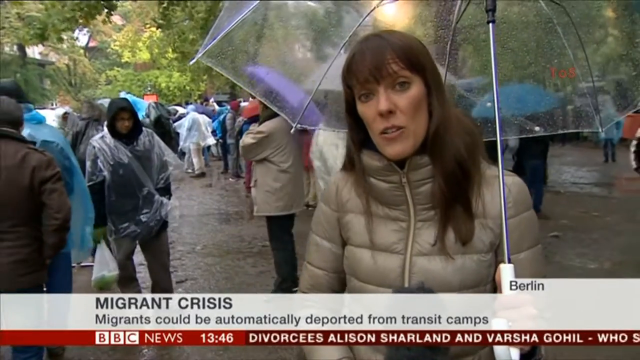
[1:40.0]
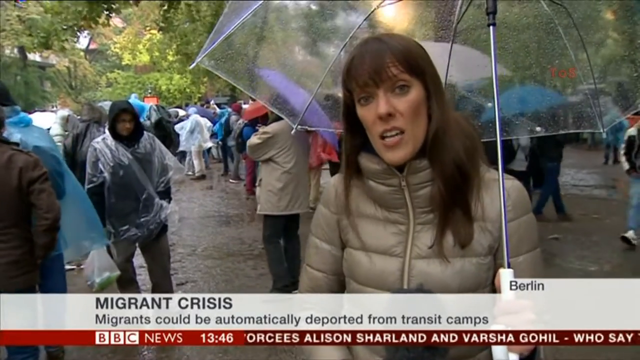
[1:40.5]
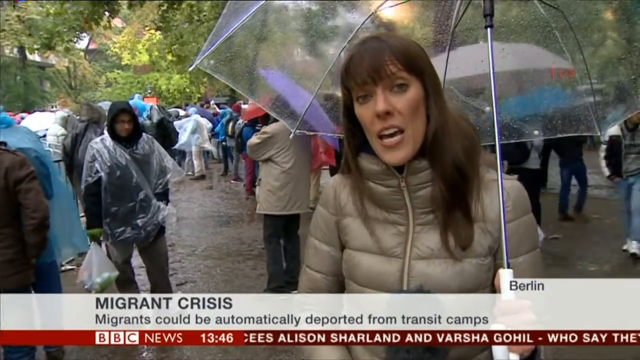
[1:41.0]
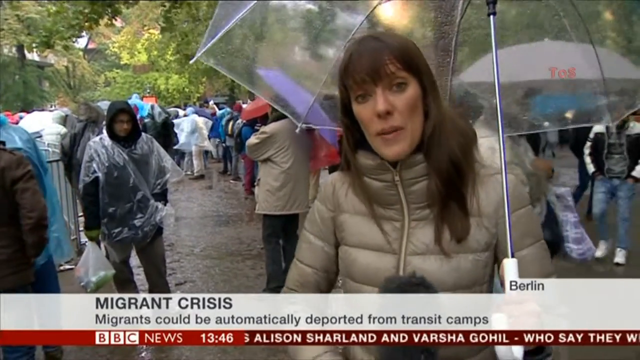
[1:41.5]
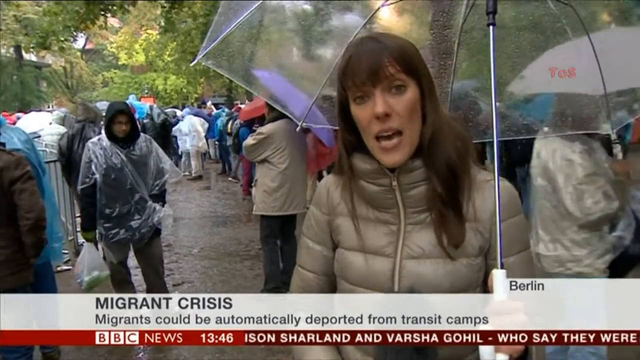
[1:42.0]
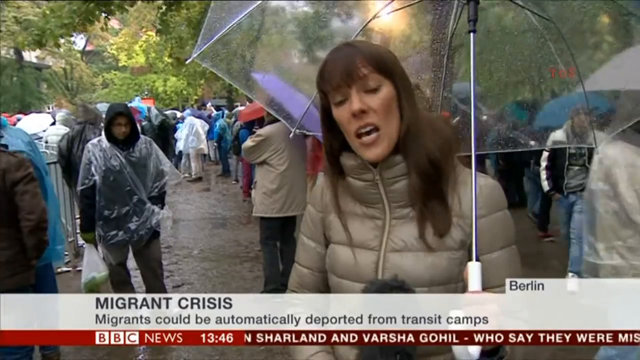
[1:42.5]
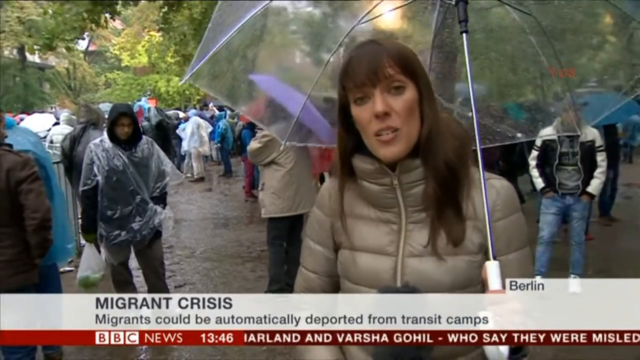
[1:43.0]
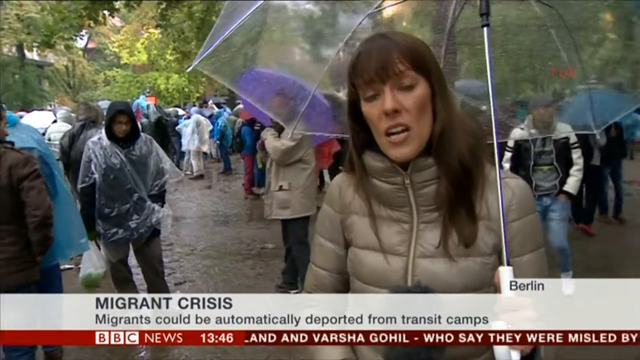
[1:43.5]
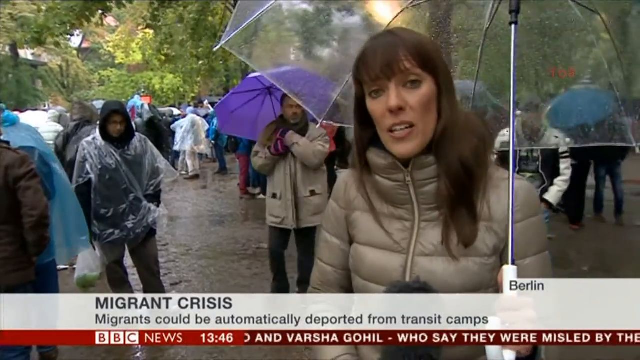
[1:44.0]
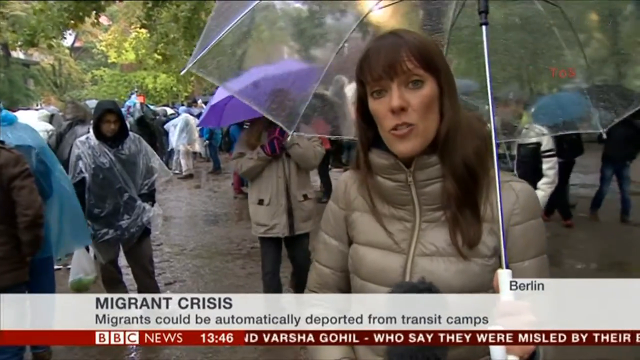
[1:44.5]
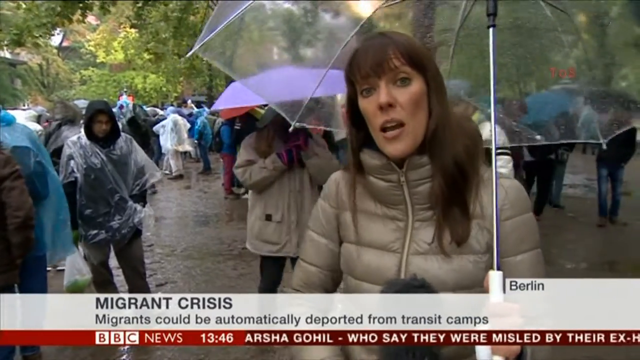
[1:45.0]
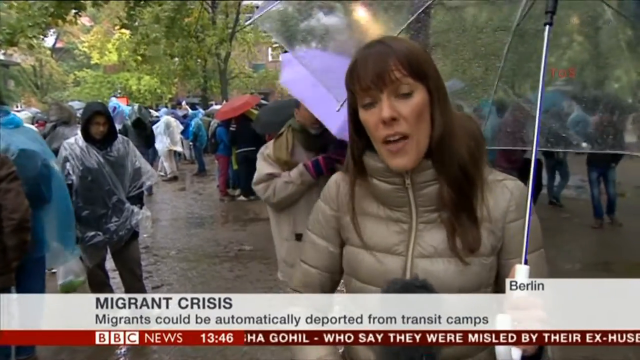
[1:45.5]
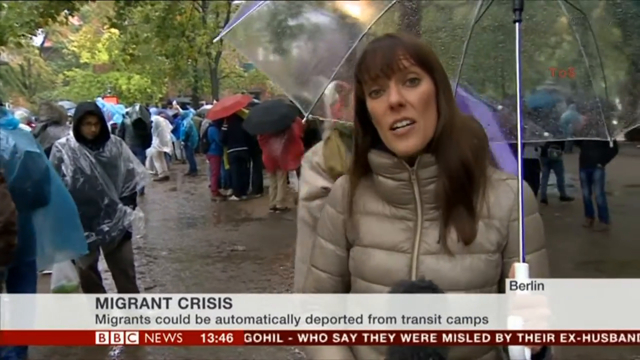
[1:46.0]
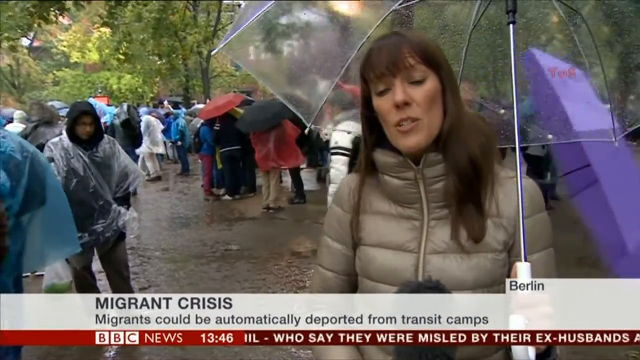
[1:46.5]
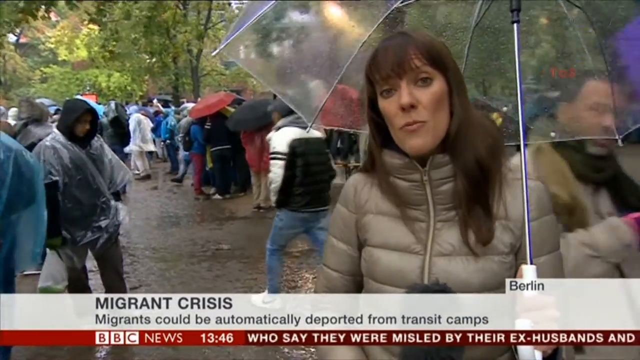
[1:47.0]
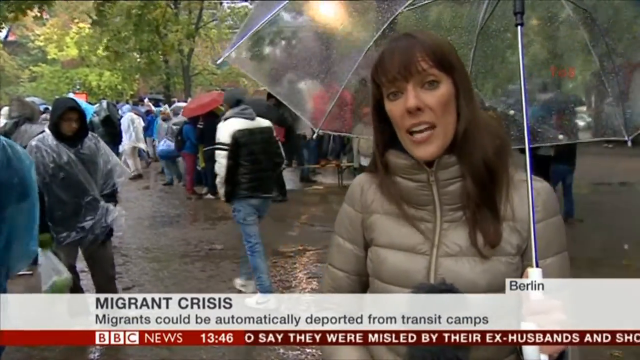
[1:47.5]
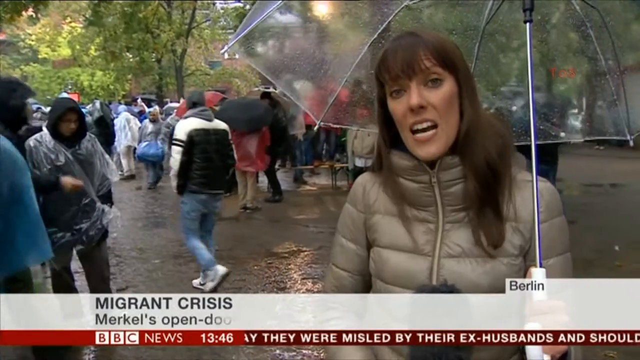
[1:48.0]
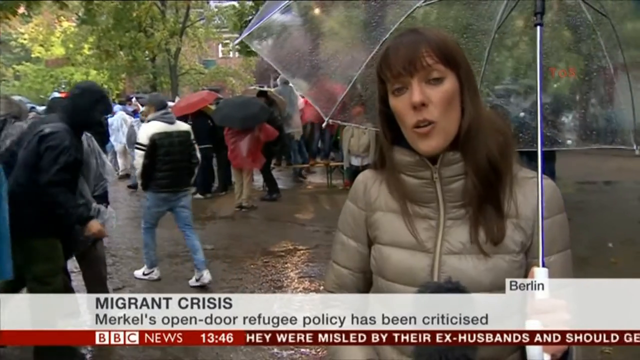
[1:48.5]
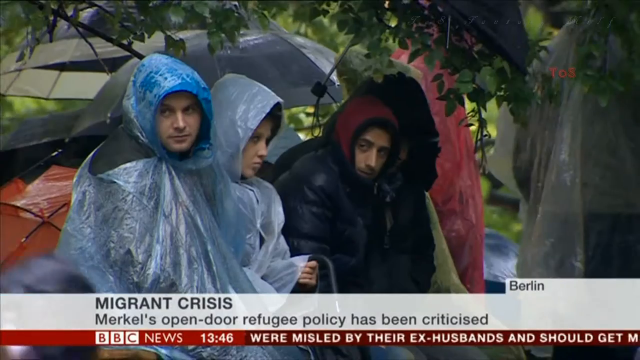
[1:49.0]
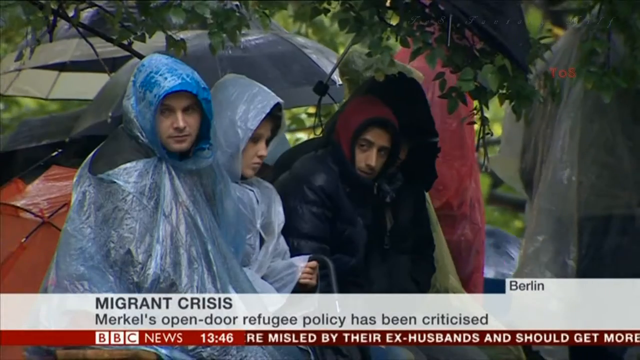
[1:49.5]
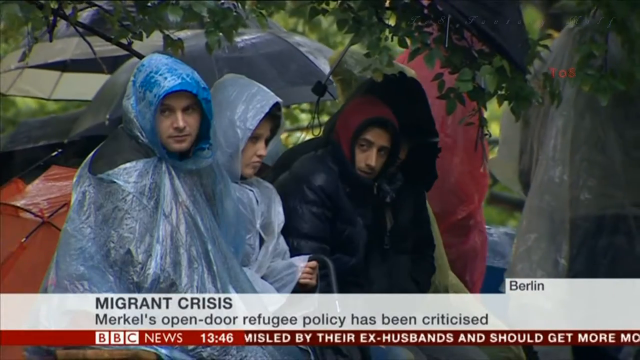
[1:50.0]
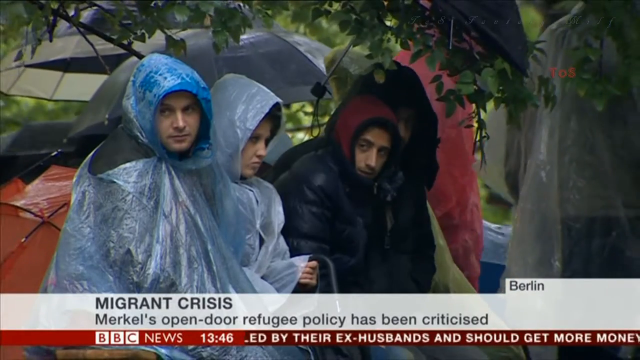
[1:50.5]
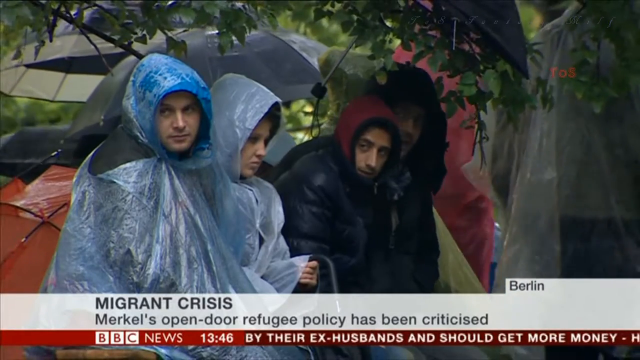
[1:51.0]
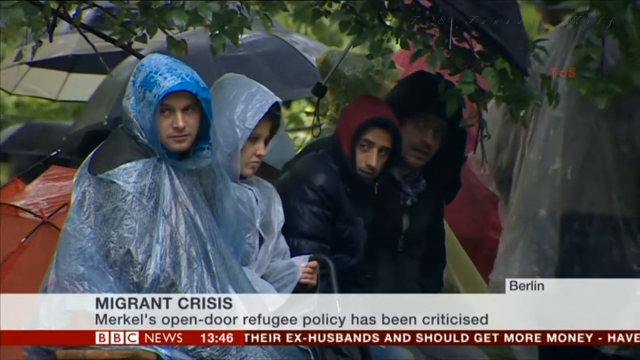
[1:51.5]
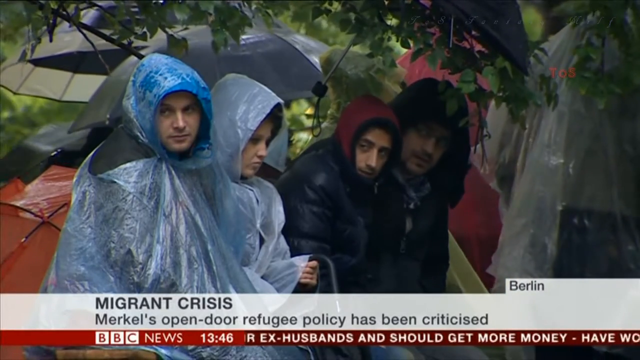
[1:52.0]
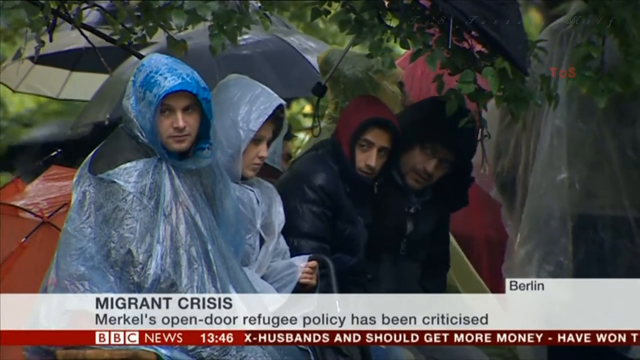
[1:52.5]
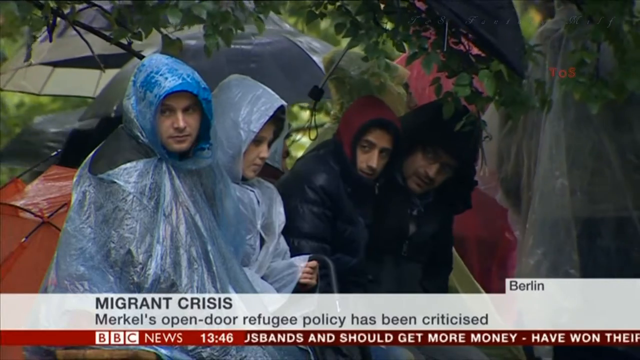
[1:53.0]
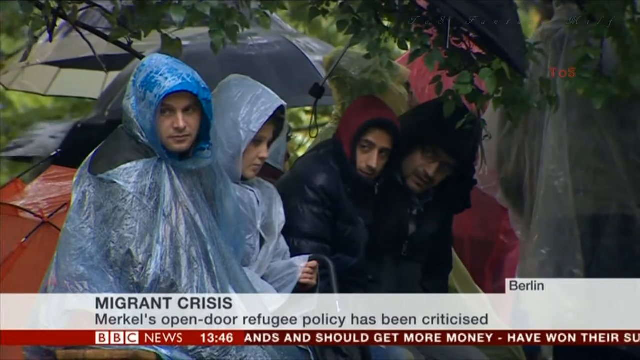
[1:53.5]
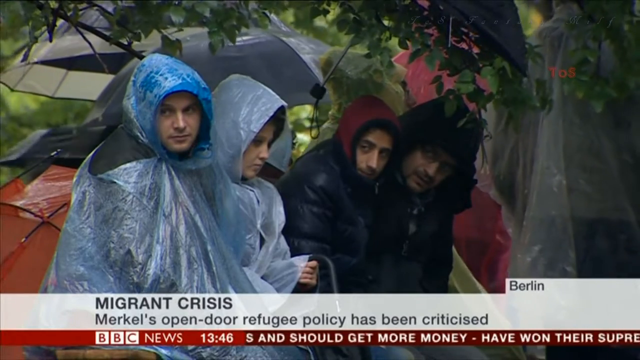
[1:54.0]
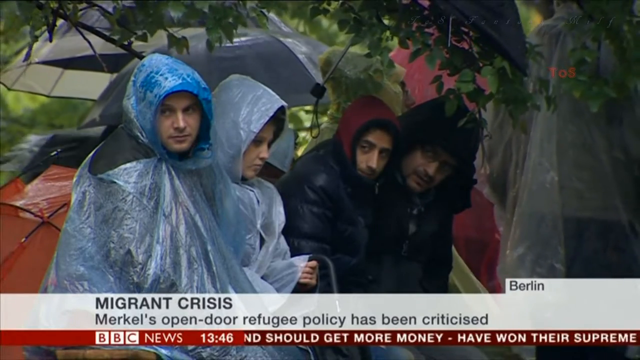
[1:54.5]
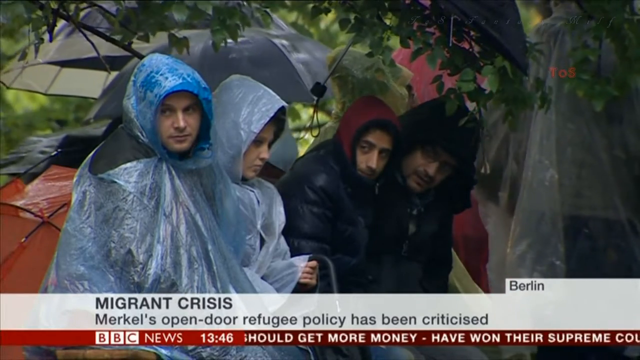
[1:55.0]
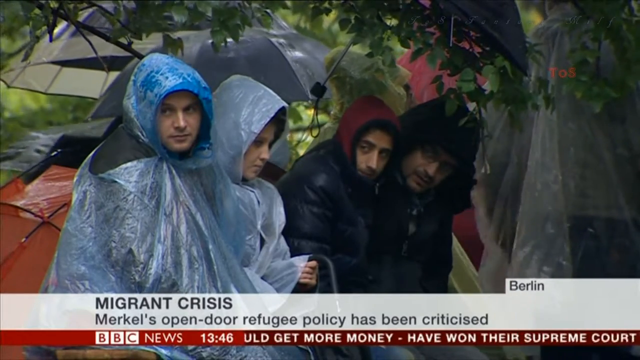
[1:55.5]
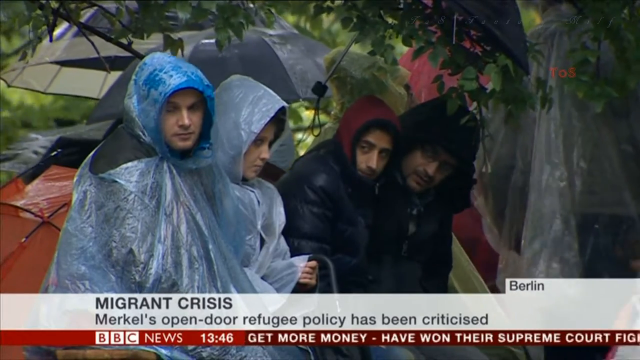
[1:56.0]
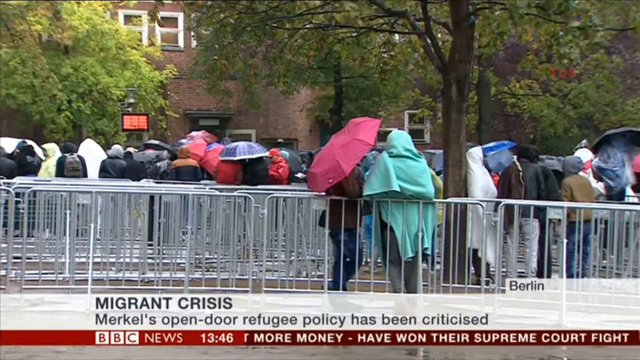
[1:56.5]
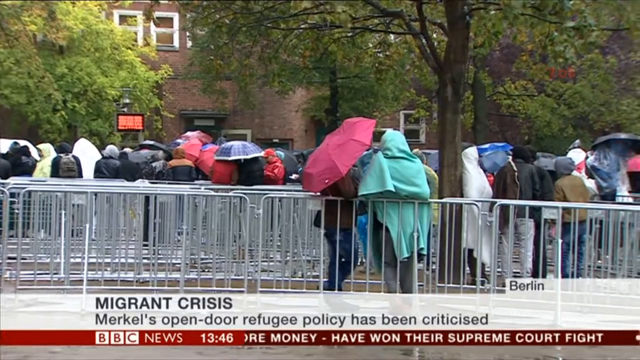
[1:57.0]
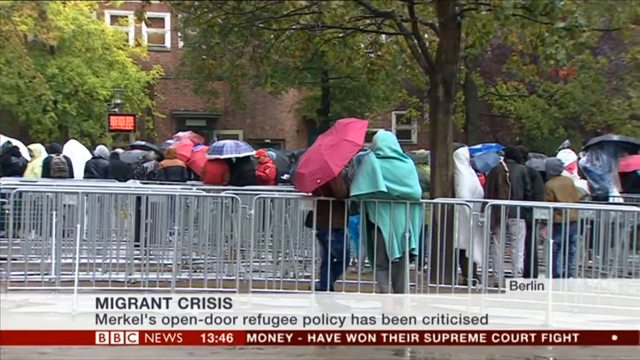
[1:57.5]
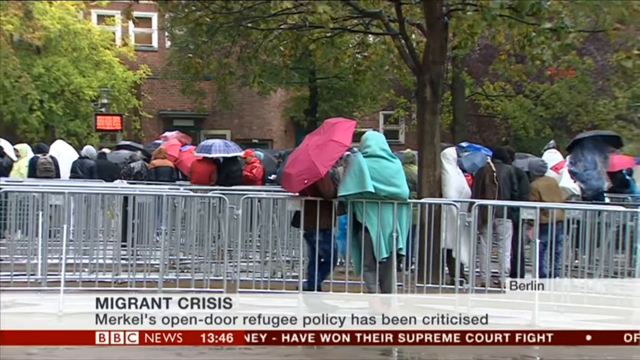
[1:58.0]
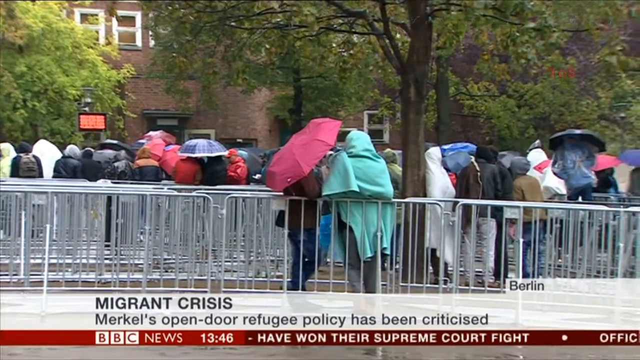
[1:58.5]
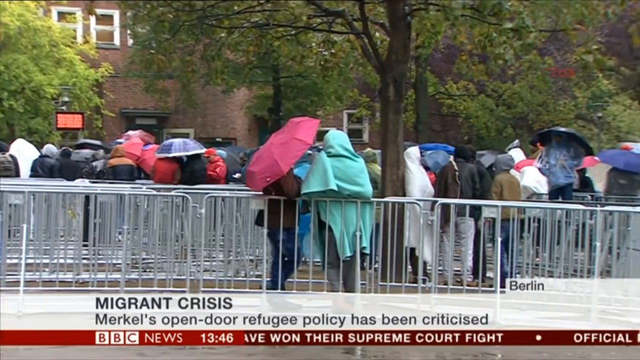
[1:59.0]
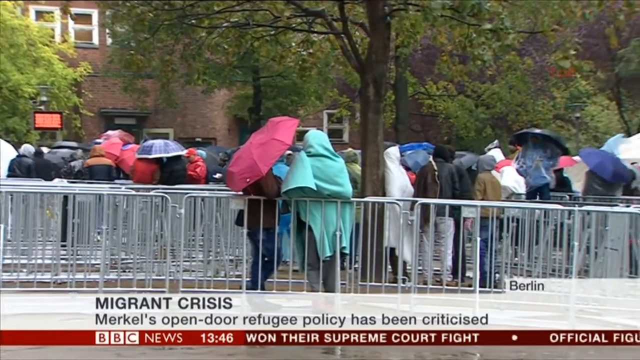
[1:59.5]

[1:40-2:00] The reporter is still talking, a little more intensely; her mouth opens wide and she moves, kind of gesturing slightly with her shoulders at times. The camera pans to individuals, apparently the migrants, wearing weather clothing: some wear coats, others coats and rain gear. Multiple people outside hold umbrellas. The camera pans on to the blockade of metal gates that sections off the crowd for orderly movement. In the background are what look like residential buildings, though probably a public building of sorts; it is hard to tell. The people seem to be gathered in that direction and are not moving; the line seems to have stopped and they appear to be waiting. A sign in the background displays some type of digital data that cannot be read from this distance, and the people are kind of facing toward it.